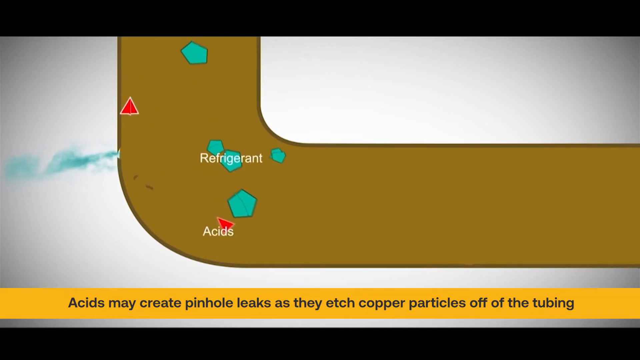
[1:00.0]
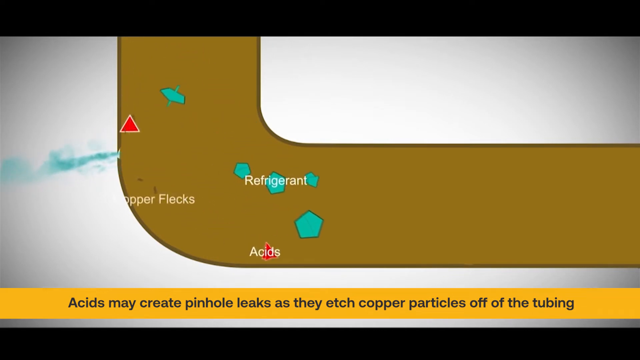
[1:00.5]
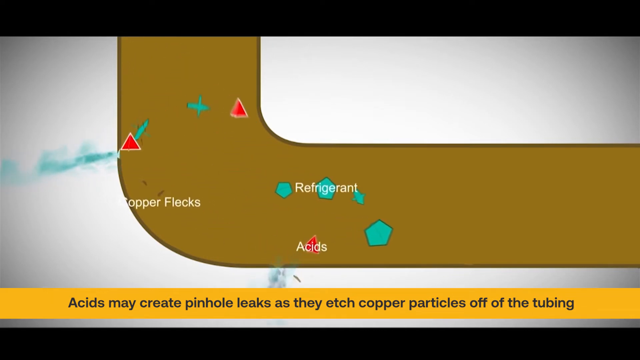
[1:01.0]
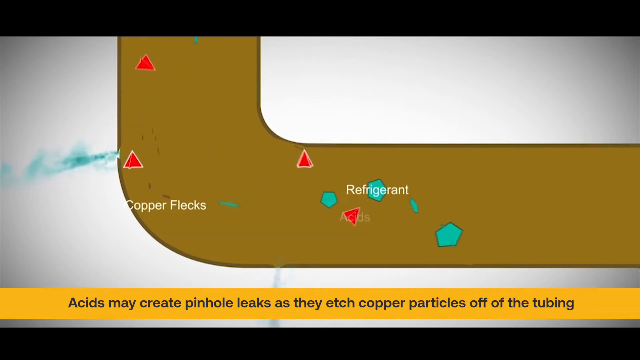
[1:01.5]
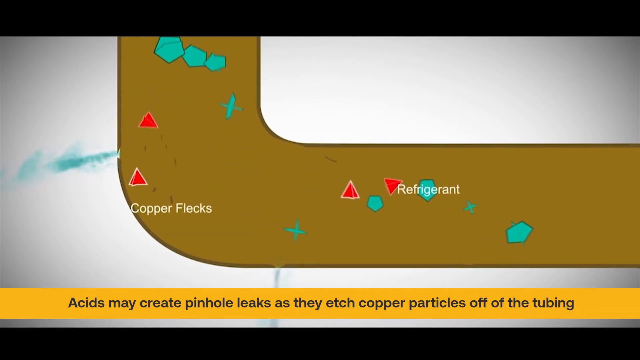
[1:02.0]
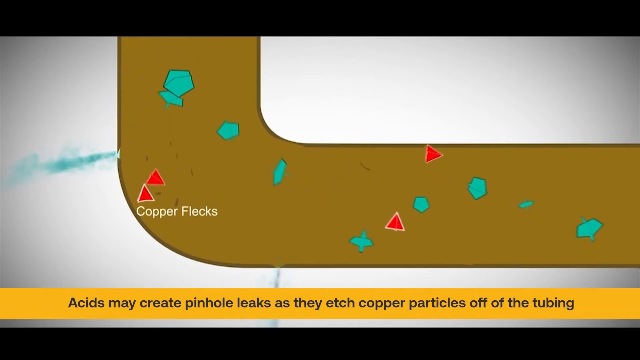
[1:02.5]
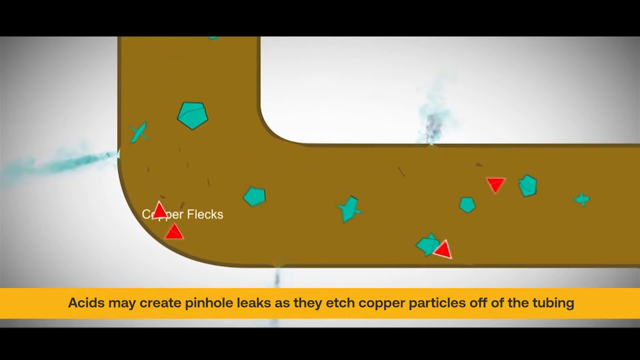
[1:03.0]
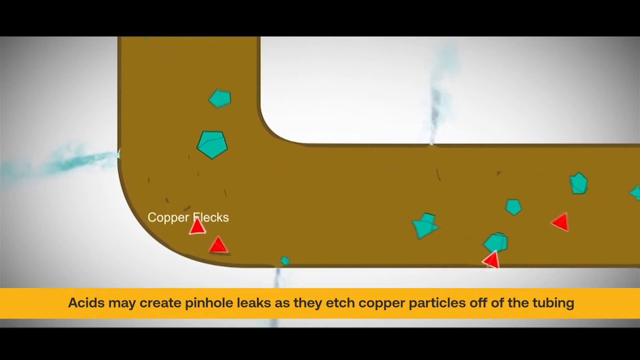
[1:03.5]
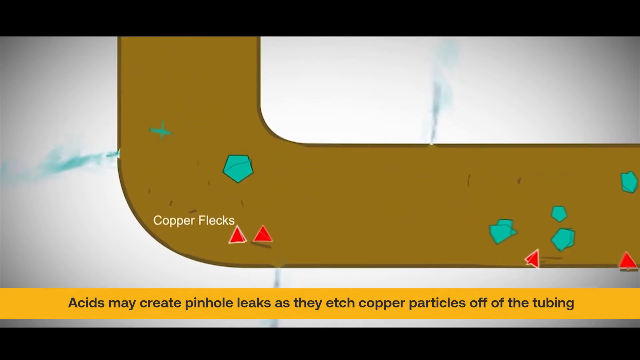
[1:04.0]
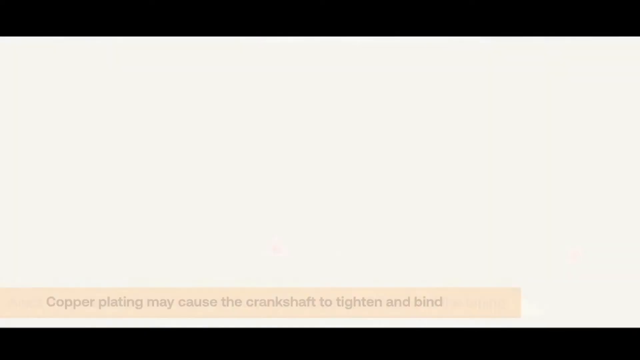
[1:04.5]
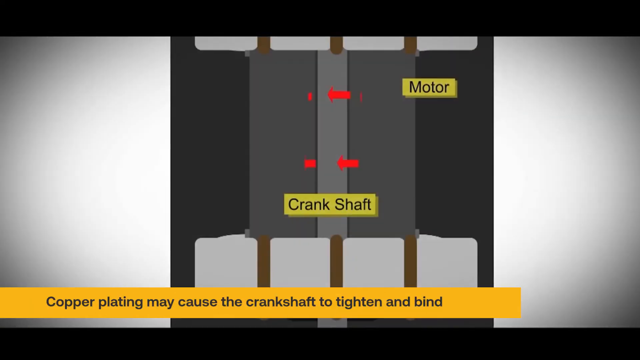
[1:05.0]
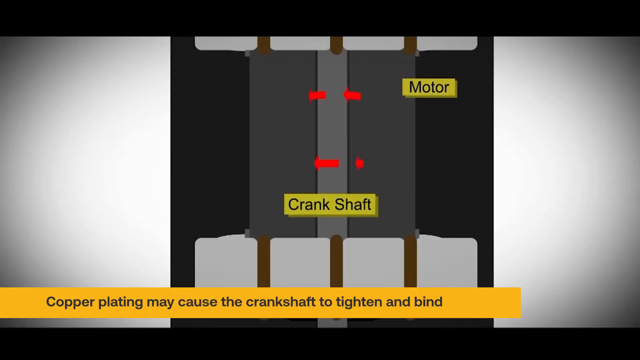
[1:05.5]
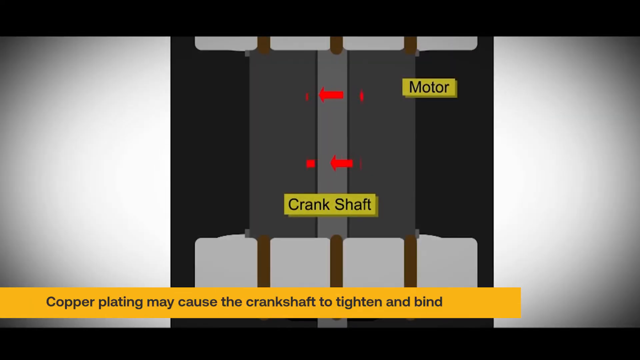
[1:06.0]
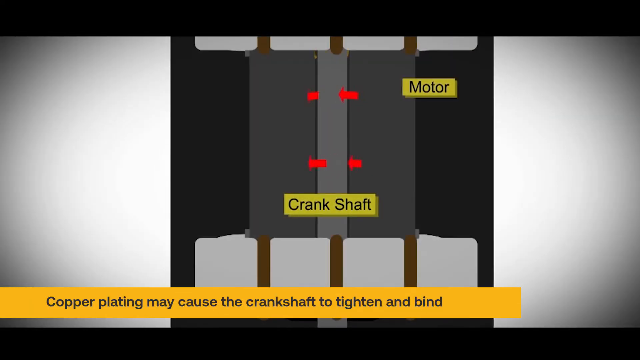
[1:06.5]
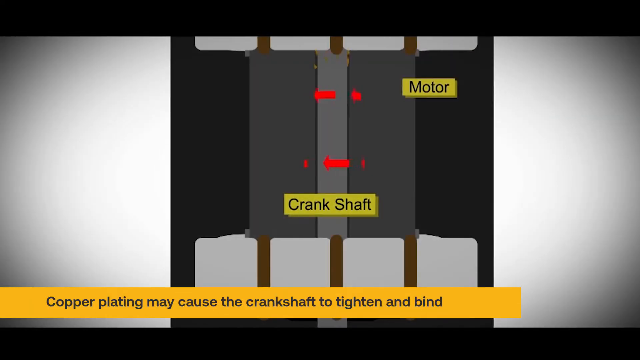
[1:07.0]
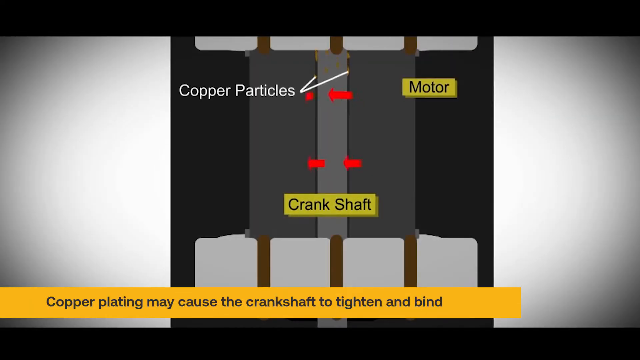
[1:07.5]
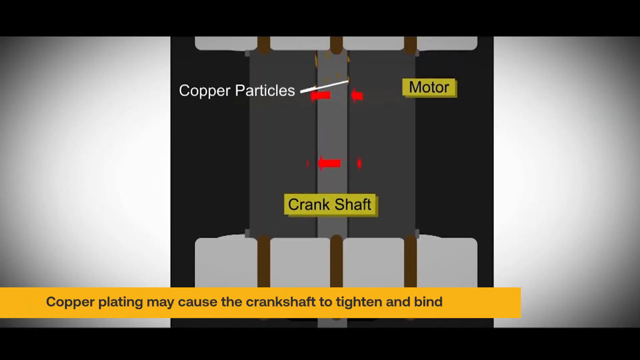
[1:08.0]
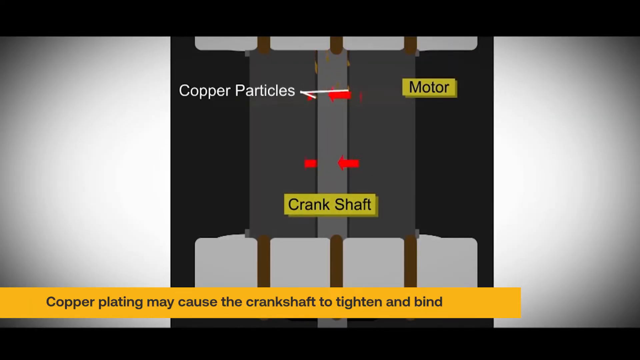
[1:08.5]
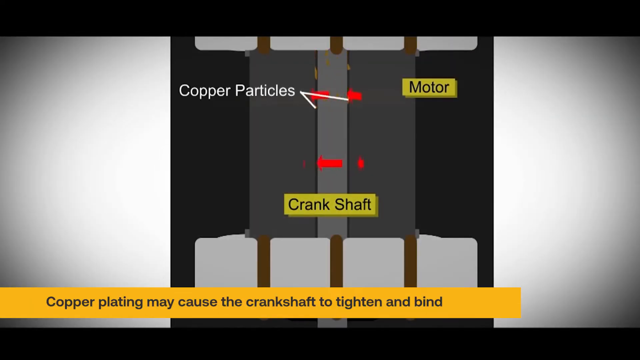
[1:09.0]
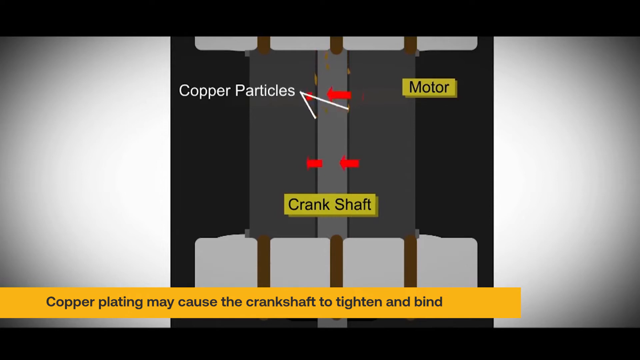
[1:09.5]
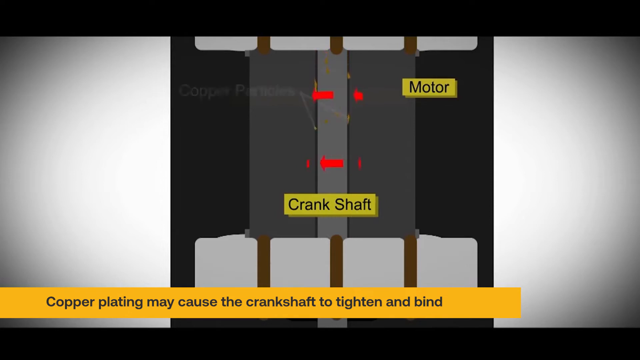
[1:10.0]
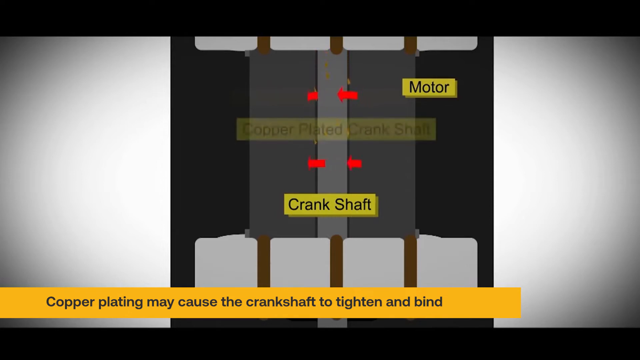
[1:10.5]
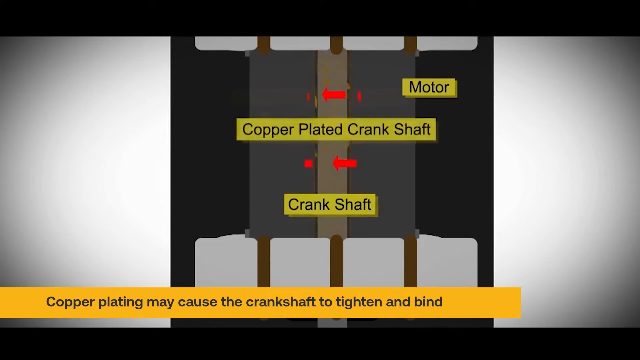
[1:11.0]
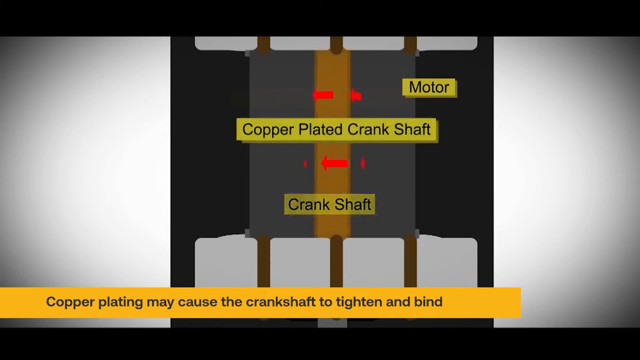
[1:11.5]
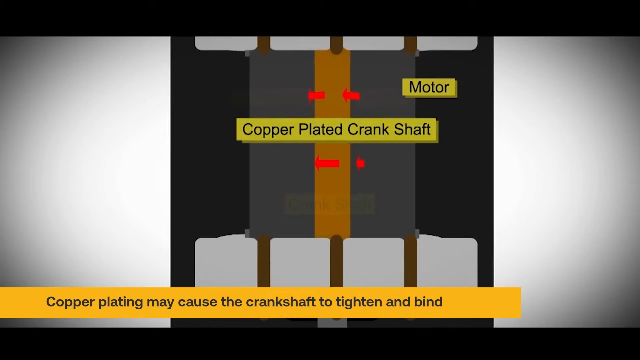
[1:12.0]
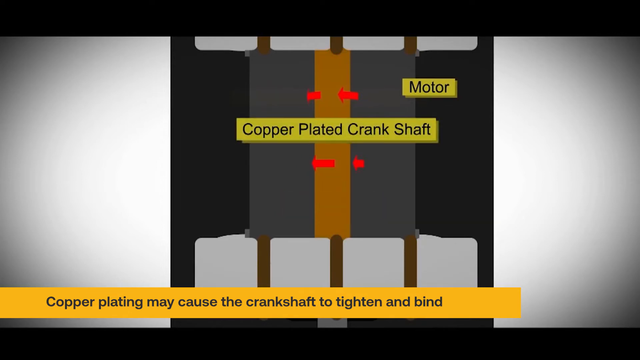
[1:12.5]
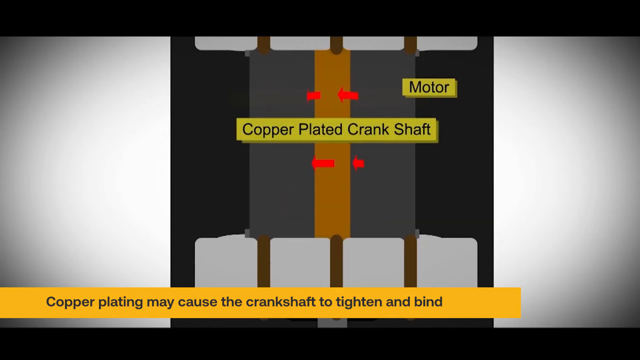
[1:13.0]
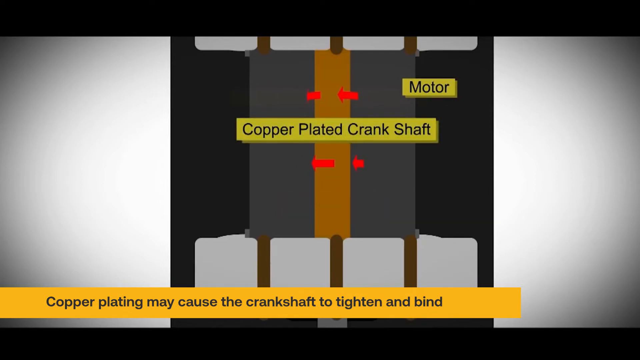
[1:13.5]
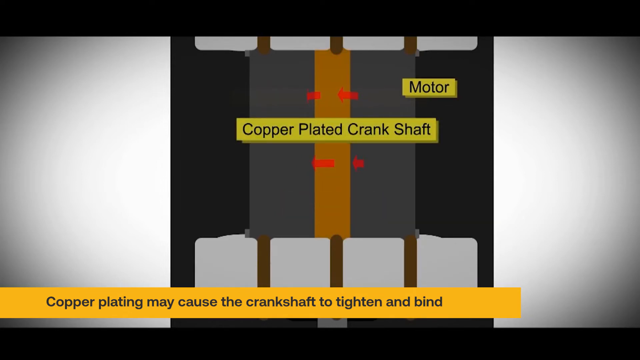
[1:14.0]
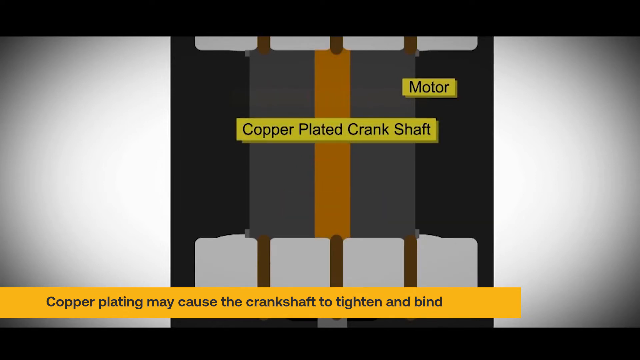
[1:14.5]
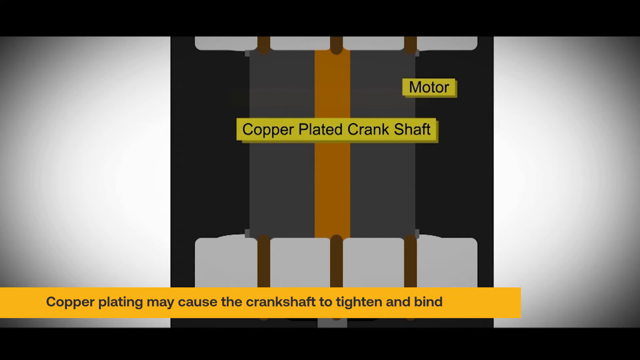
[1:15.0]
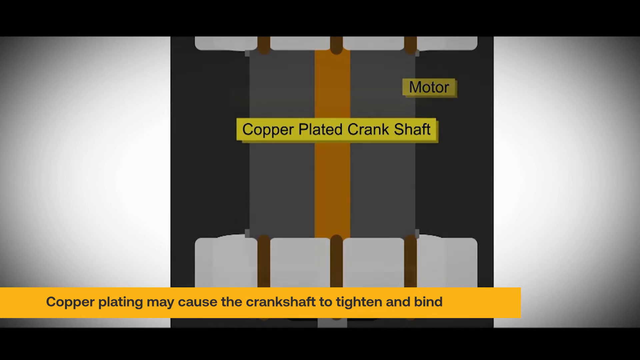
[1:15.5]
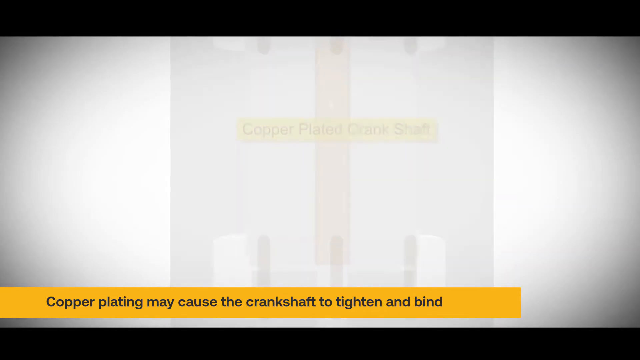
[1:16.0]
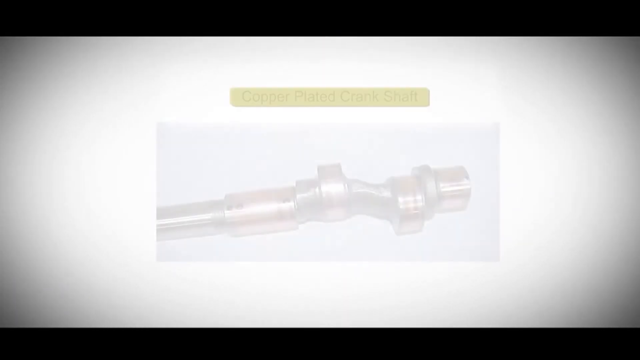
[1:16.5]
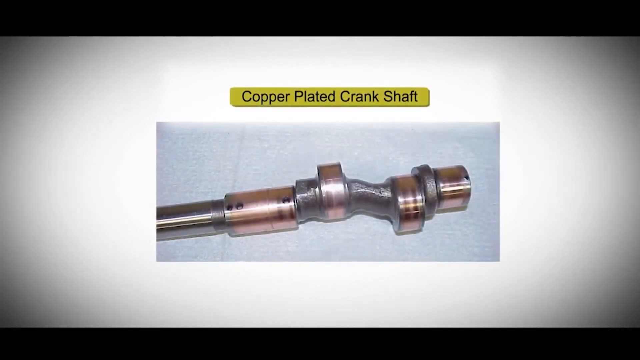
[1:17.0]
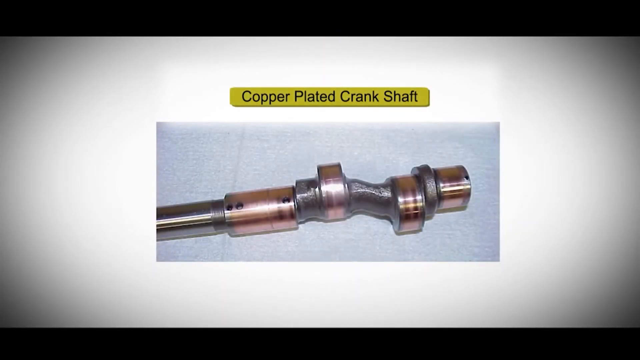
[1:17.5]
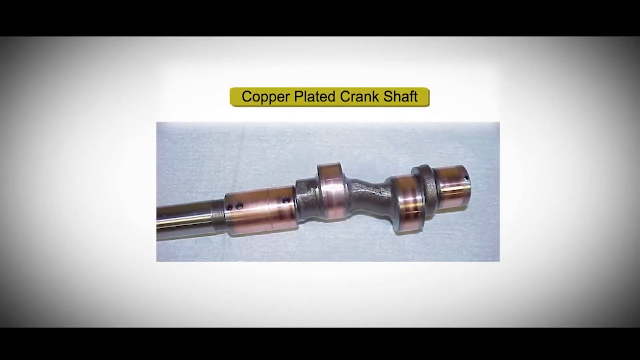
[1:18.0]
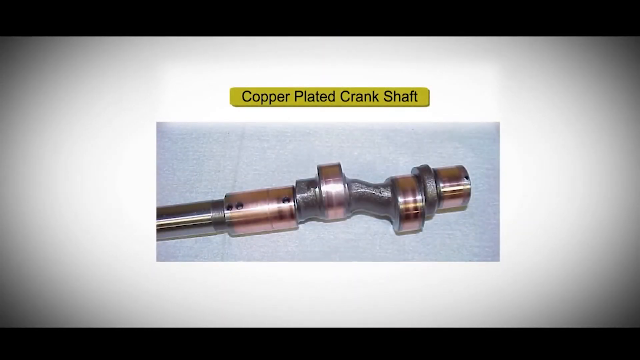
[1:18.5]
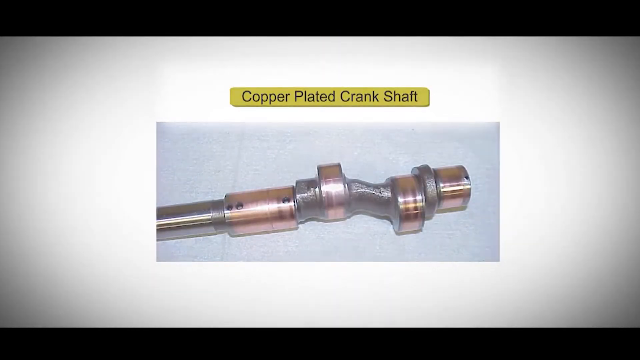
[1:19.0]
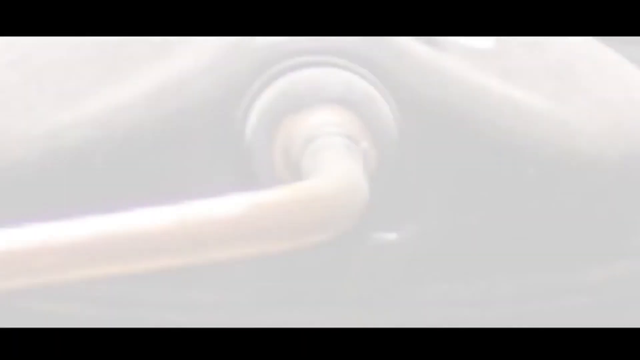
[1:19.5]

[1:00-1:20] Refrigerant and acid move through the tubing. According to the diagram, the acid creates holes in the tubing, causing damage and leakage. The video transitions to another screen showing "copper plating may cause the crankshaft to tighten and bind". It then shows a real picture of a copper-plated crankshaft, apparently as an example of what such a crankshaft looks like.